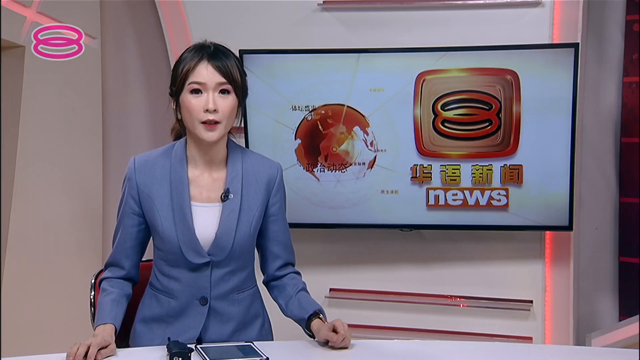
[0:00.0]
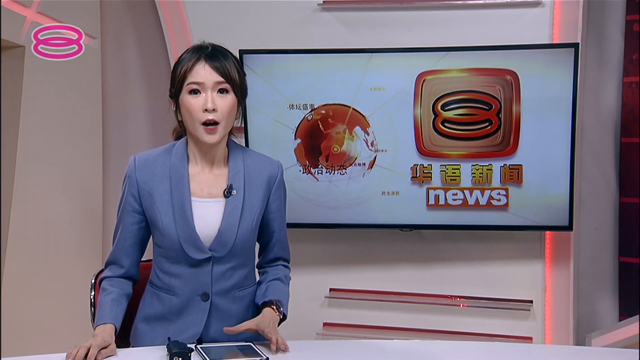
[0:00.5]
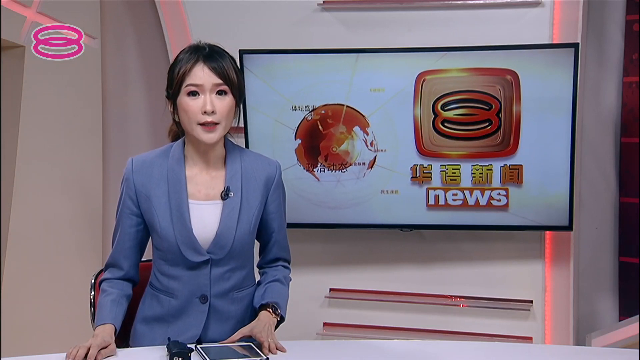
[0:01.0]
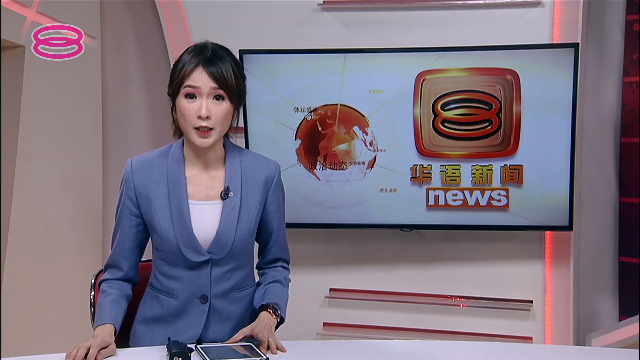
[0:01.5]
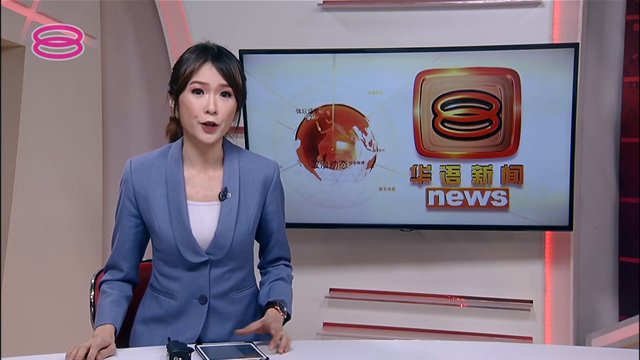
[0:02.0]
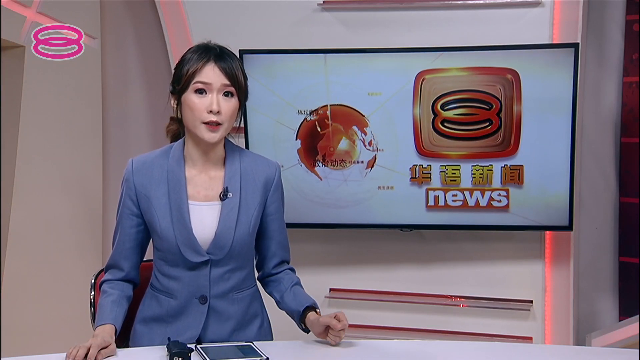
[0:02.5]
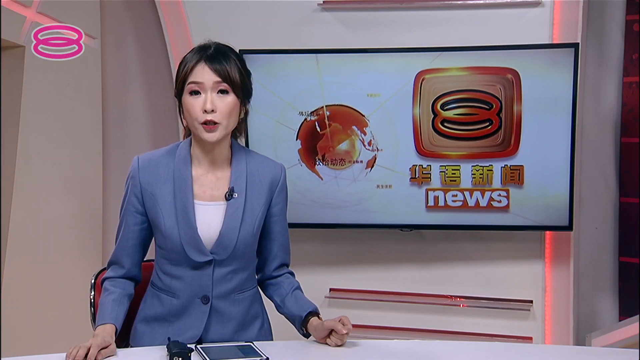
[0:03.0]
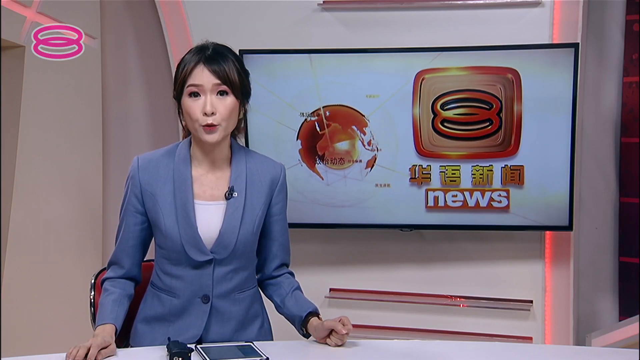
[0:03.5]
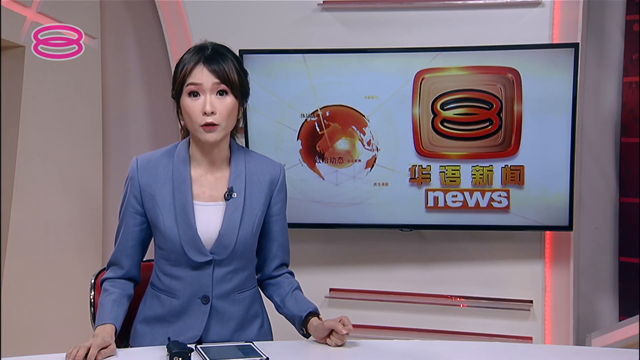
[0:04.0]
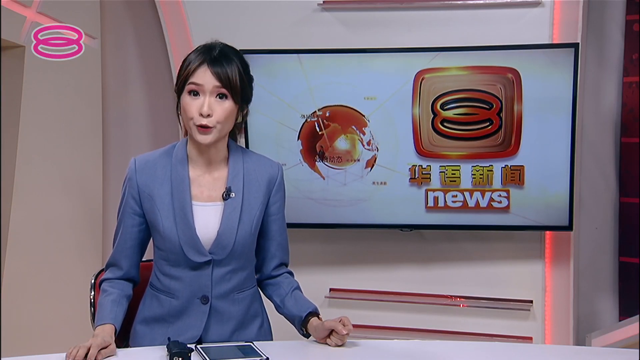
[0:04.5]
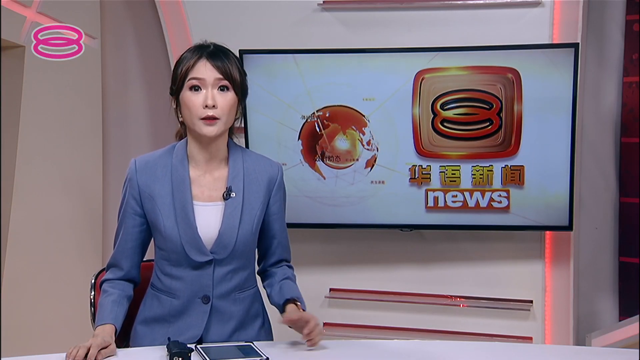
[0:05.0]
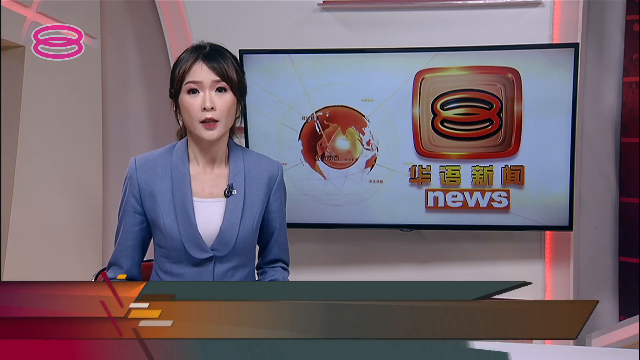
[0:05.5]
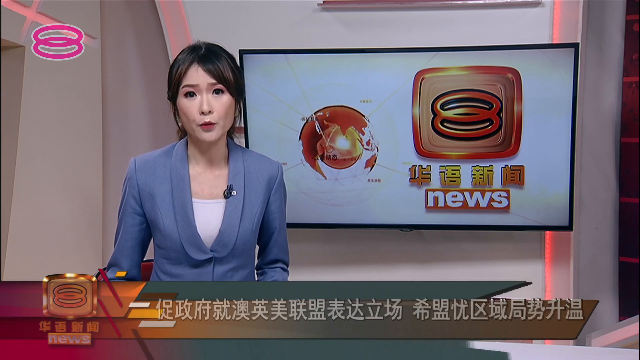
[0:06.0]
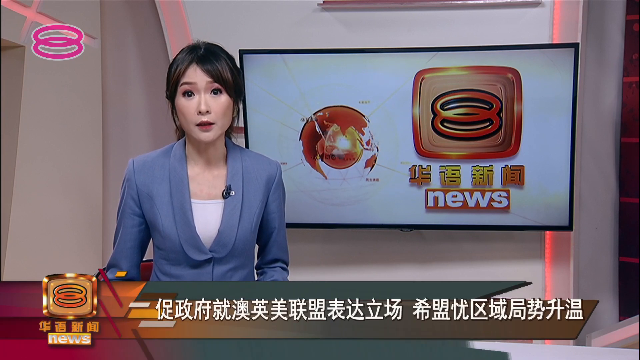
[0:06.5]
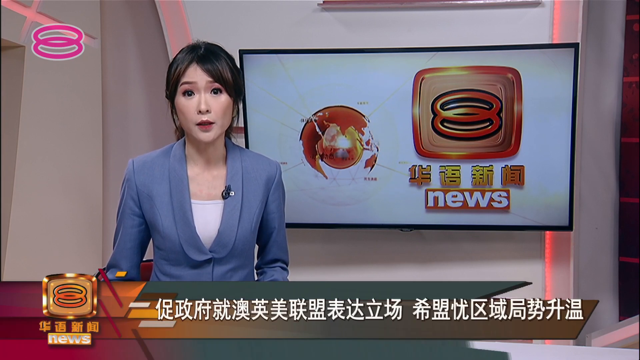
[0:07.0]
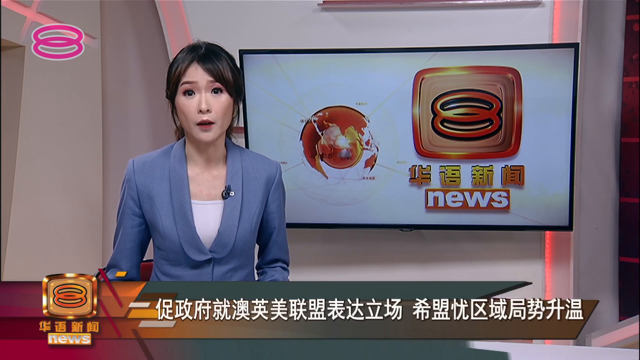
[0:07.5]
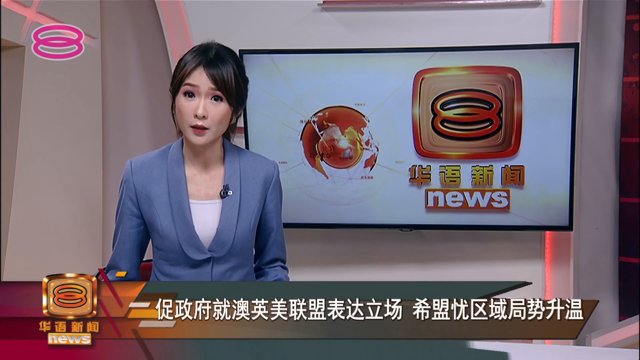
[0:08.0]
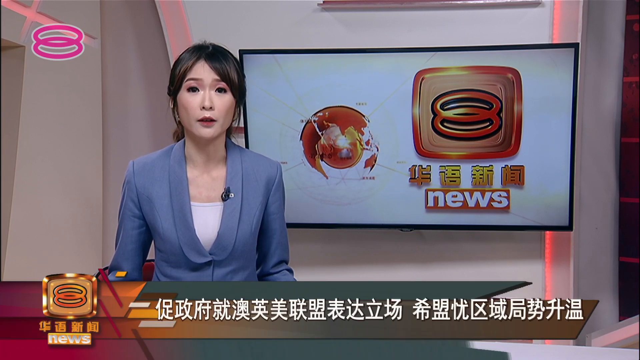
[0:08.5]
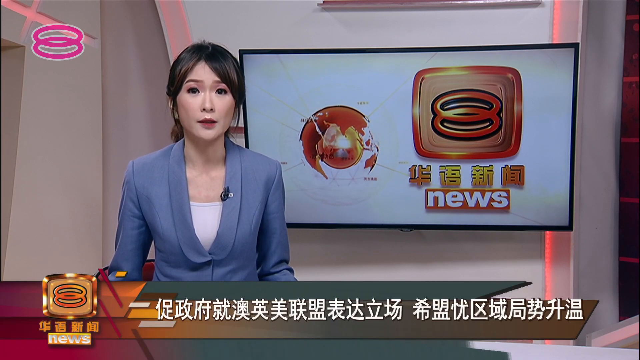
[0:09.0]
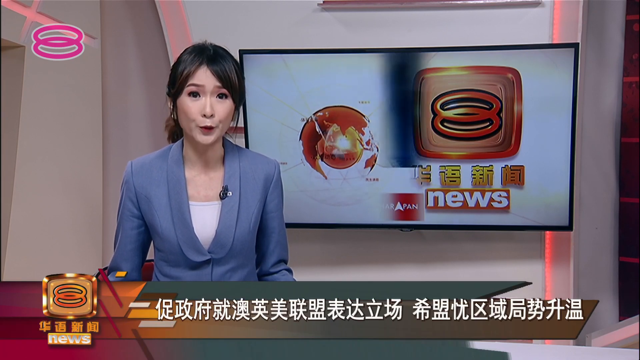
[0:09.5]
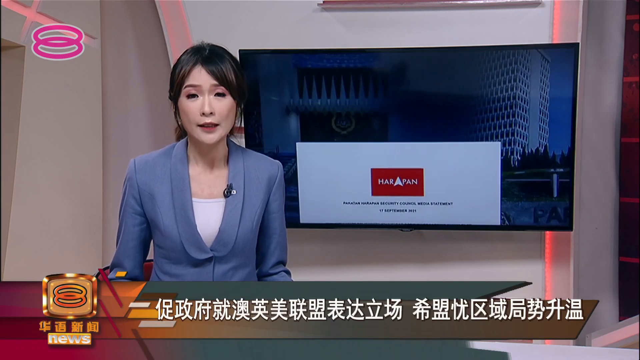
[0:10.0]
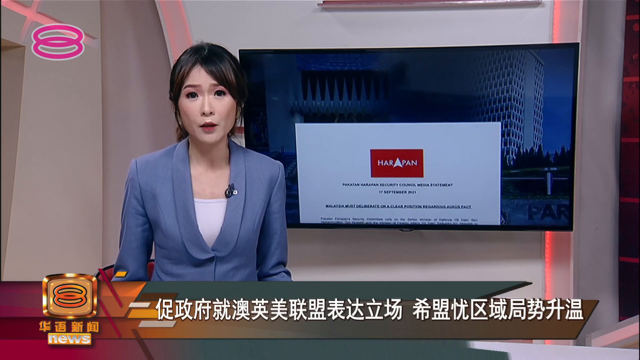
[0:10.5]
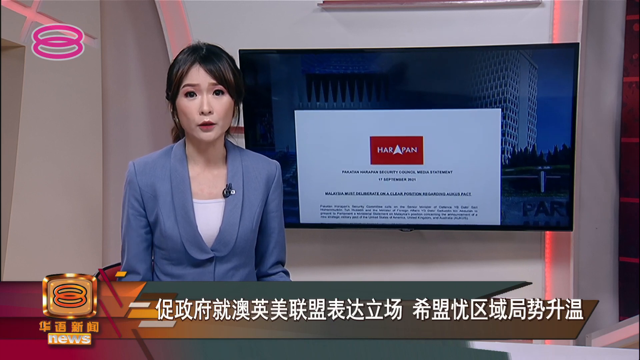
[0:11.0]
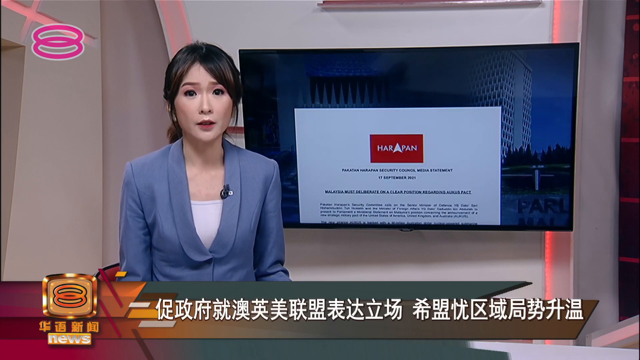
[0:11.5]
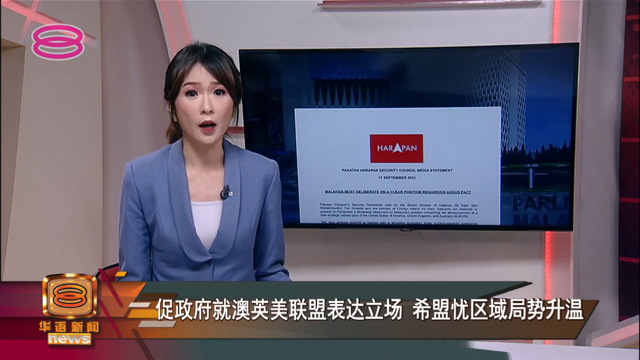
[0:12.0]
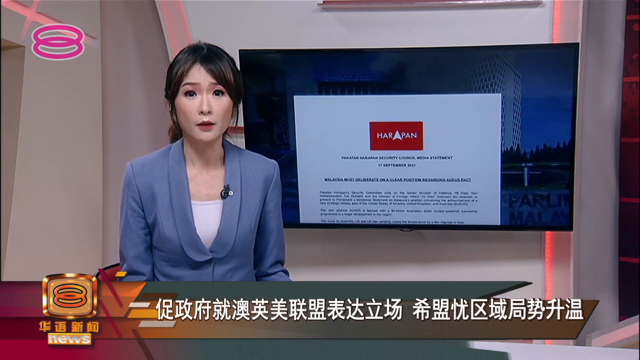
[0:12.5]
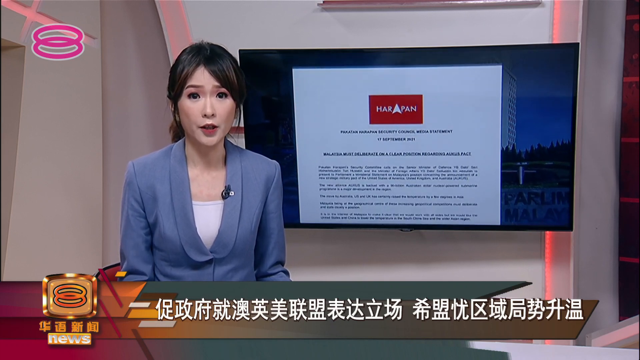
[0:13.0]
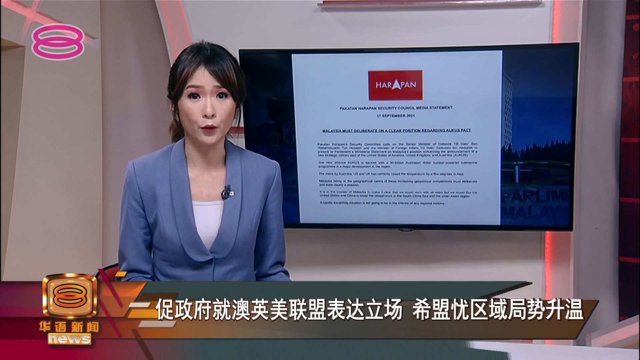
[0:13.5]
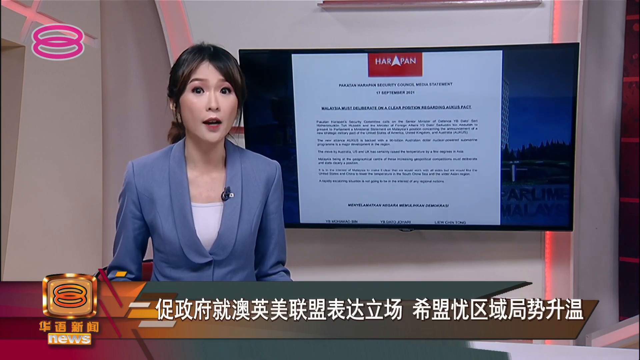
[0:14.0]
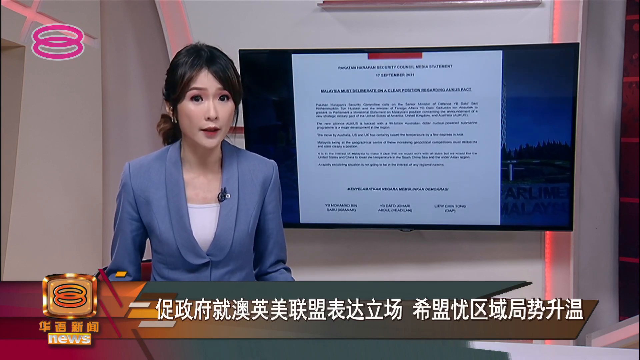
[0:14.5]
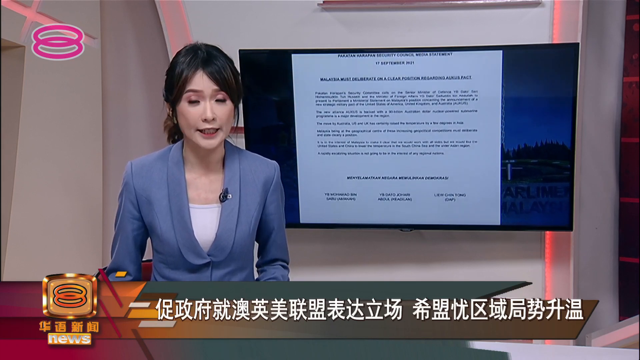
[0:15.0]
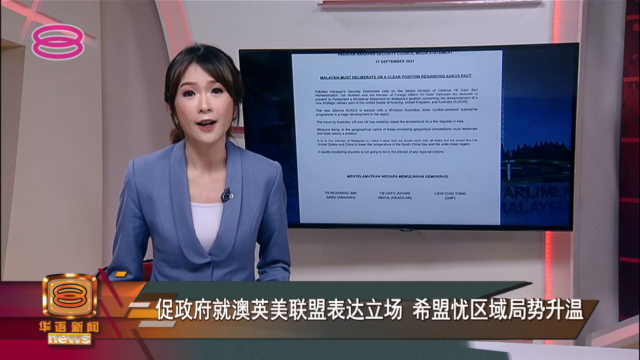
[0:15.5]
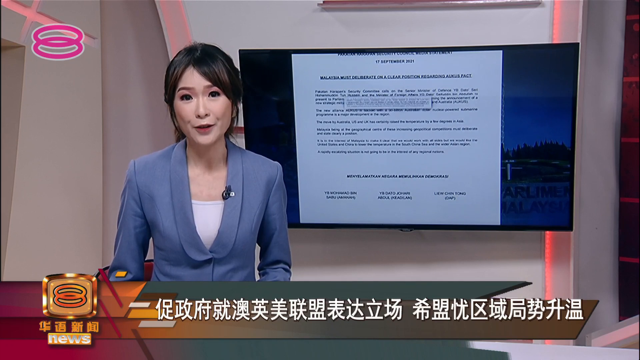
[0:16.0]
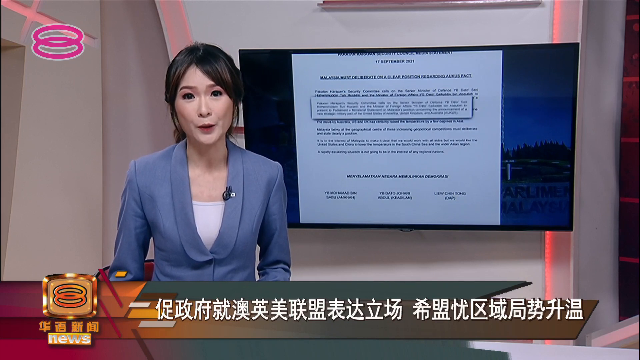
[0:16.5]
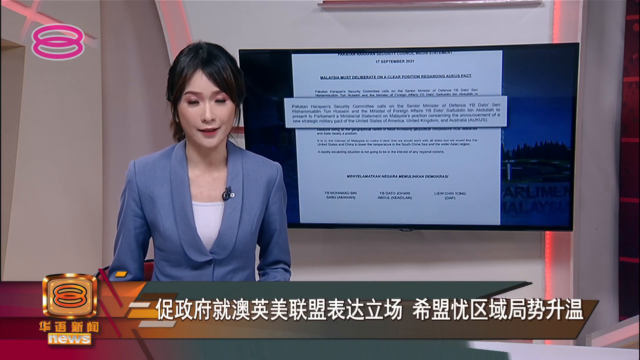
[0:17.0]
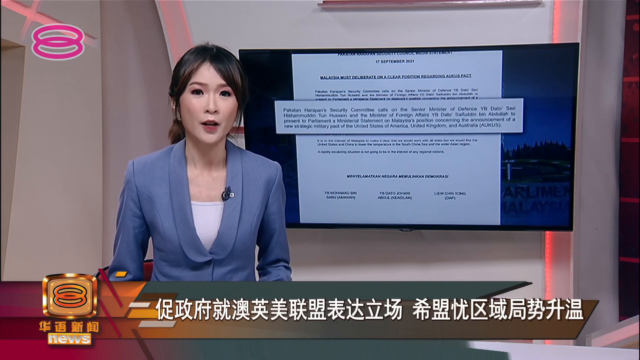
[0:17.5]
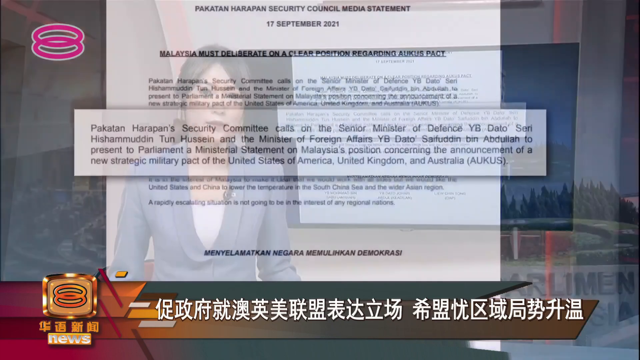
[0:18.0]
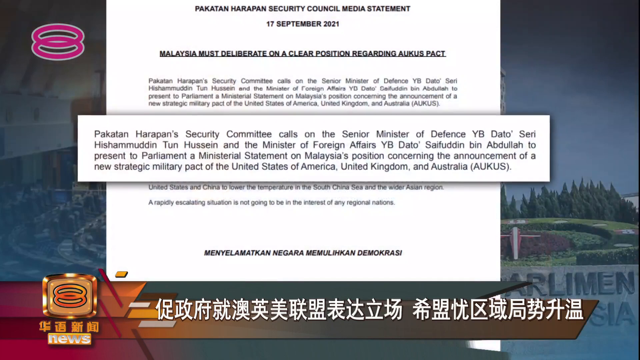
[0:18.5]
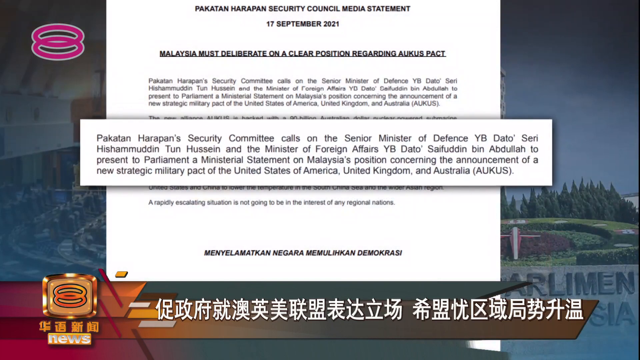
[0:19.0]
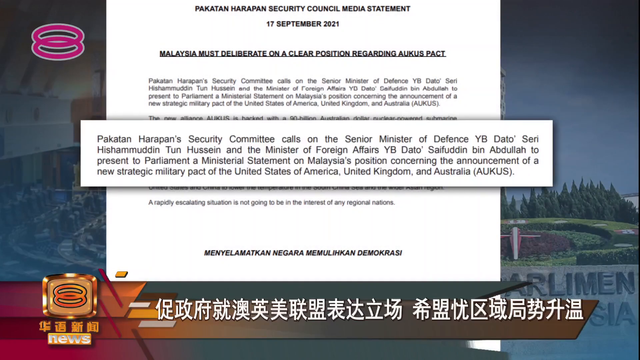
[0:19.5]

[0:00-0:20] A newscaster, a woman who appears to be Chinese, is in a studio. Behind her is a video screen with Chinese writing on it and, underneath the Chinese writing, the English word "news." Subtitles appear underneath the video, also in Chinese. A piece of paper is scrolled onto the screen behind her, bearing small English writing that is hard to make out. Some of the text is then superimposed; after a few opening words, it reads "security committee calls on the new senior minister of defense." The text also mentions the United States of America, the United Kingdom, Australia, and Malaysia. It appears to be a fairly generic statement concerning a military pact.